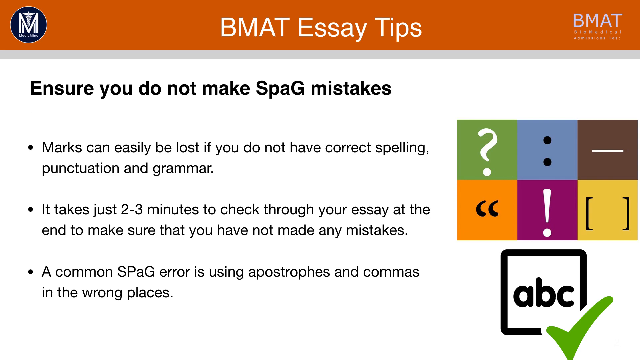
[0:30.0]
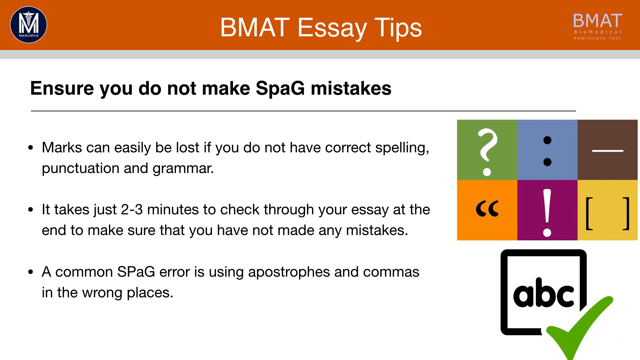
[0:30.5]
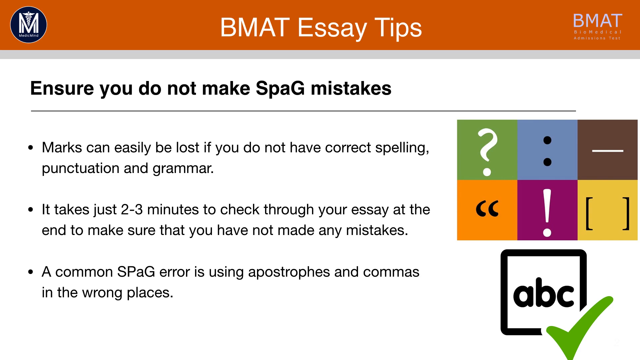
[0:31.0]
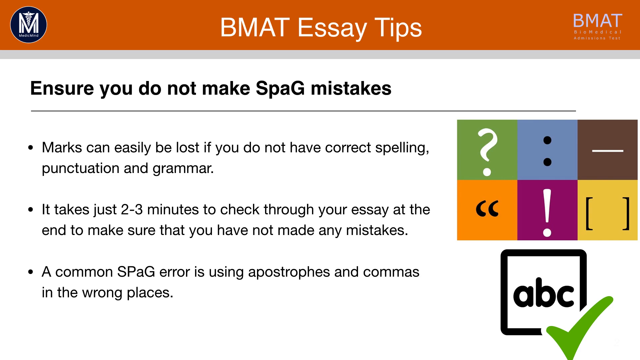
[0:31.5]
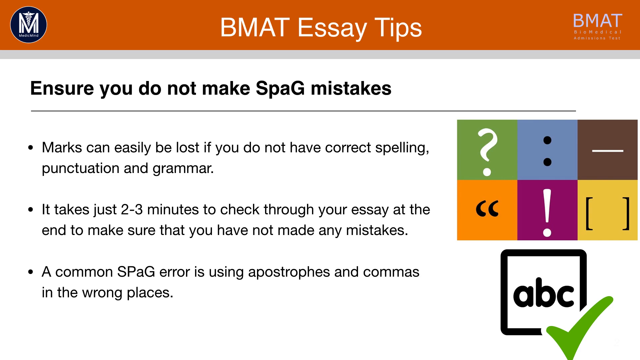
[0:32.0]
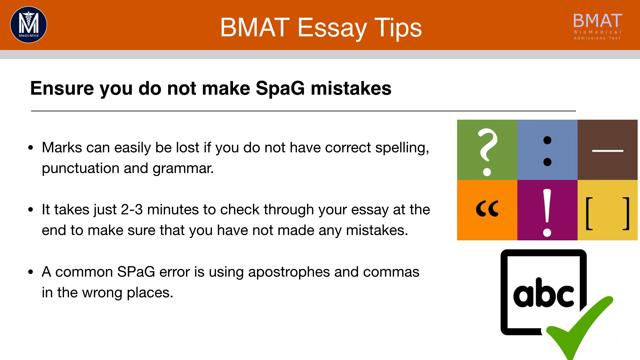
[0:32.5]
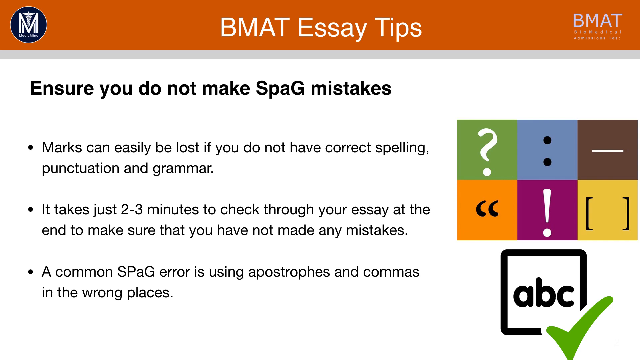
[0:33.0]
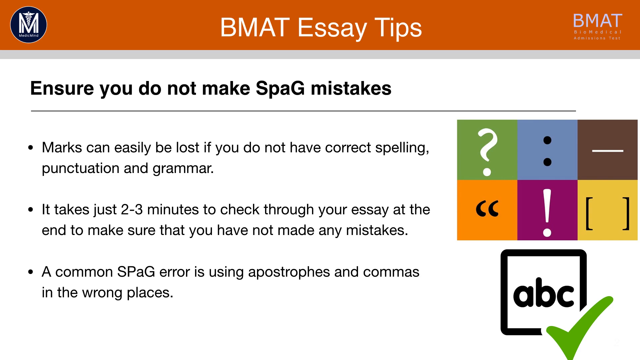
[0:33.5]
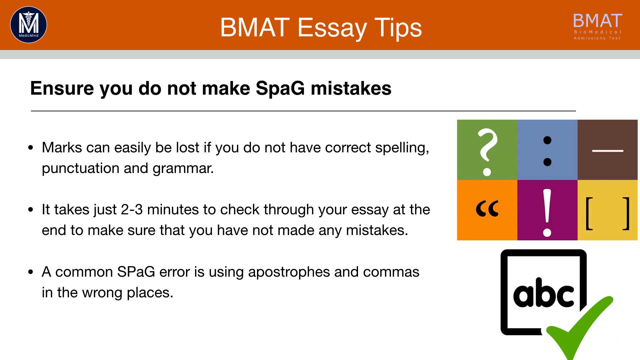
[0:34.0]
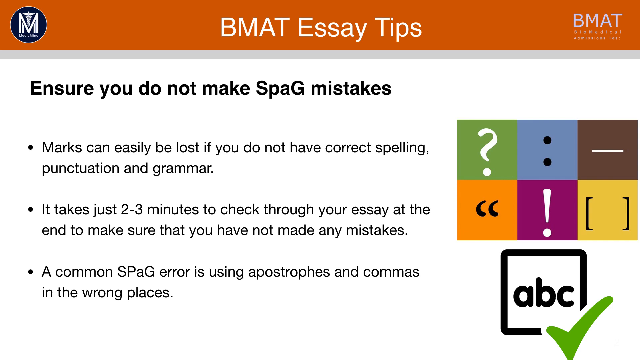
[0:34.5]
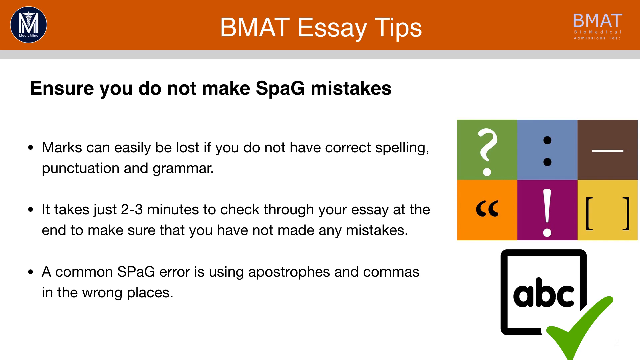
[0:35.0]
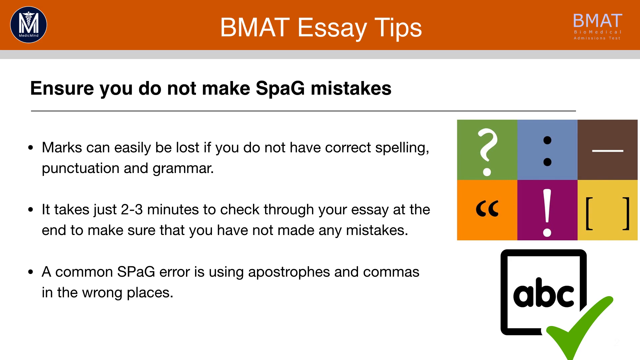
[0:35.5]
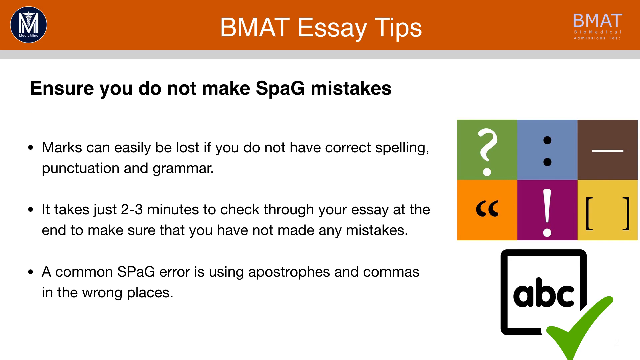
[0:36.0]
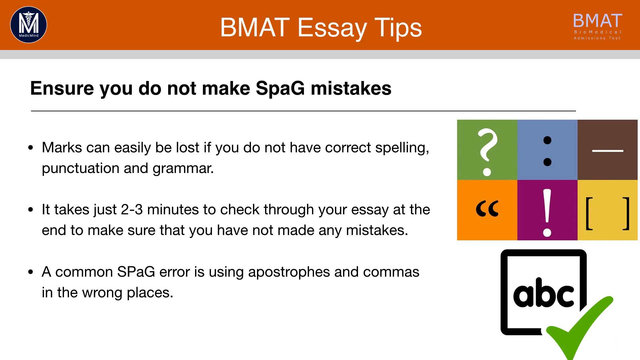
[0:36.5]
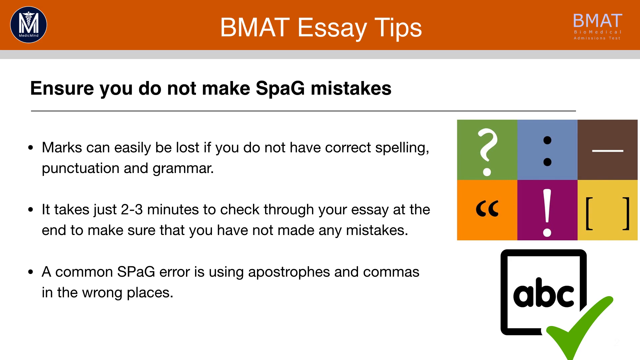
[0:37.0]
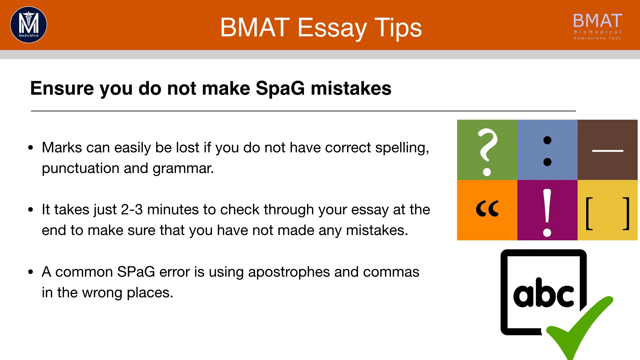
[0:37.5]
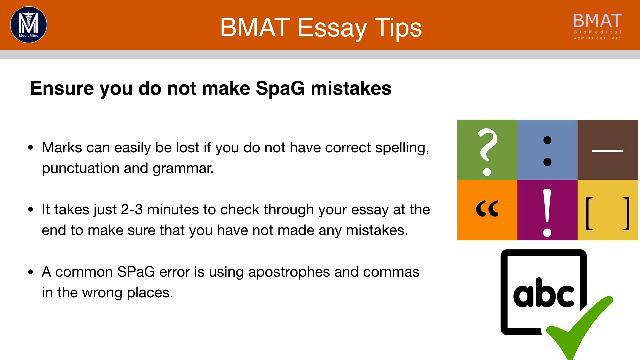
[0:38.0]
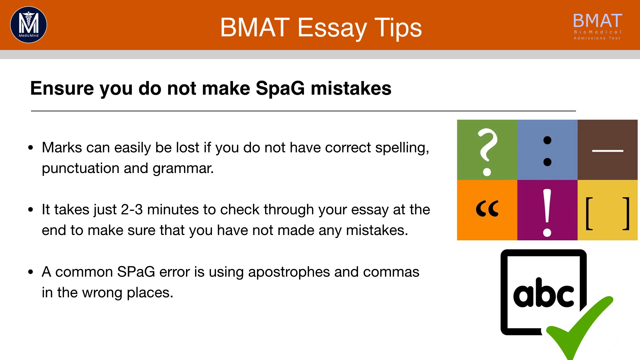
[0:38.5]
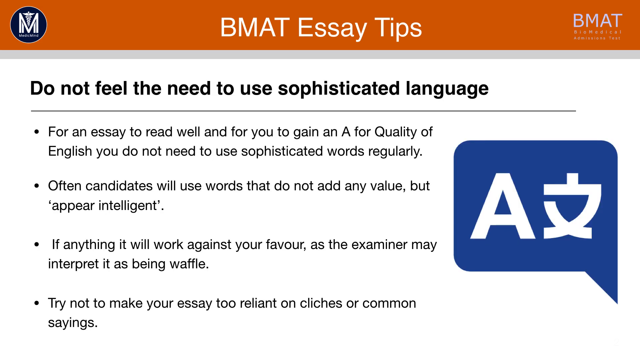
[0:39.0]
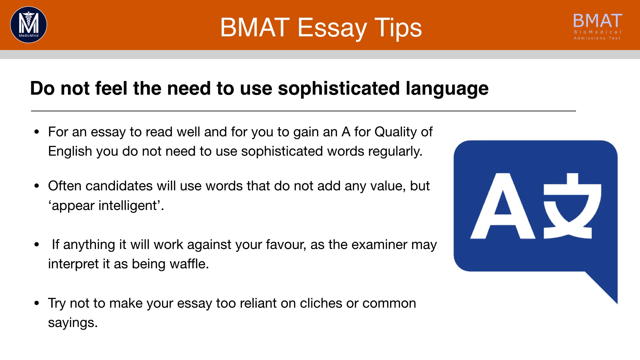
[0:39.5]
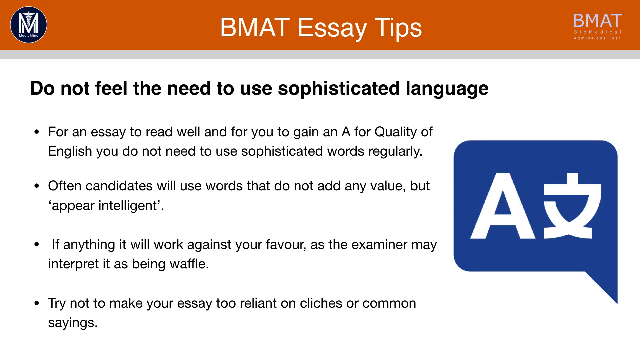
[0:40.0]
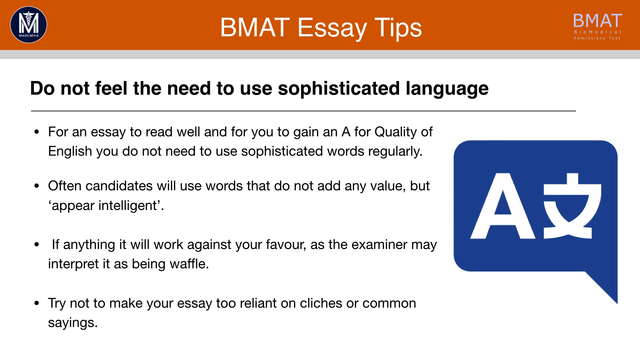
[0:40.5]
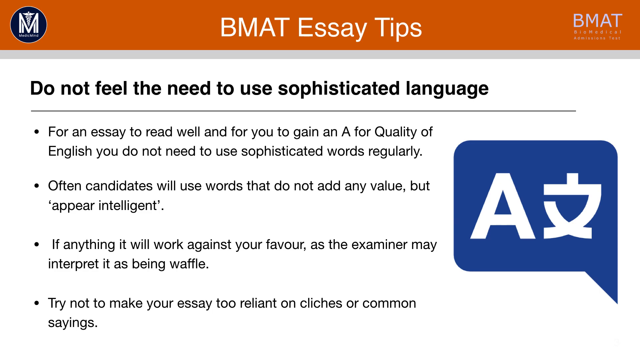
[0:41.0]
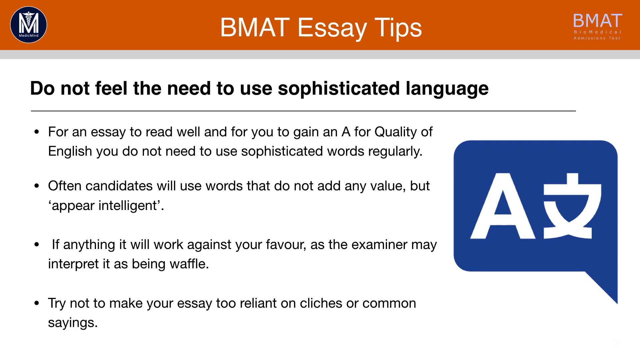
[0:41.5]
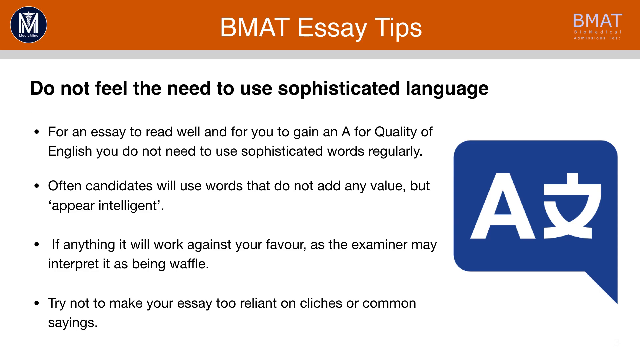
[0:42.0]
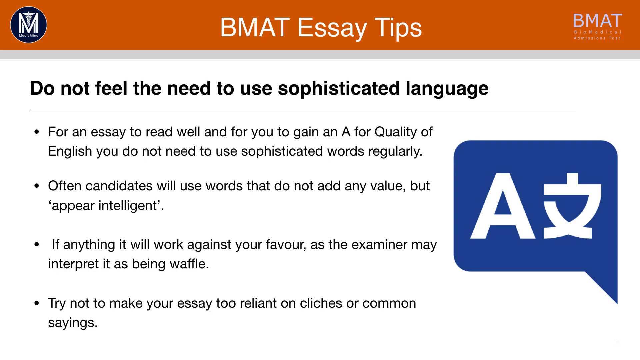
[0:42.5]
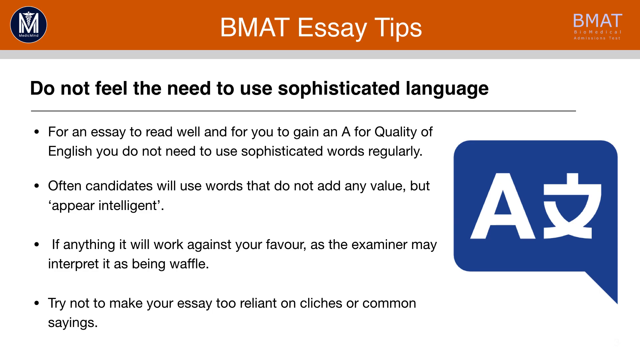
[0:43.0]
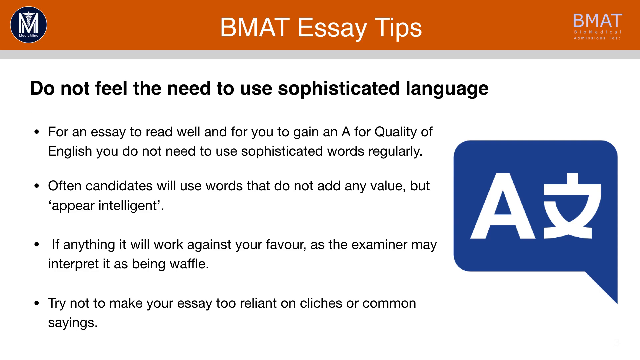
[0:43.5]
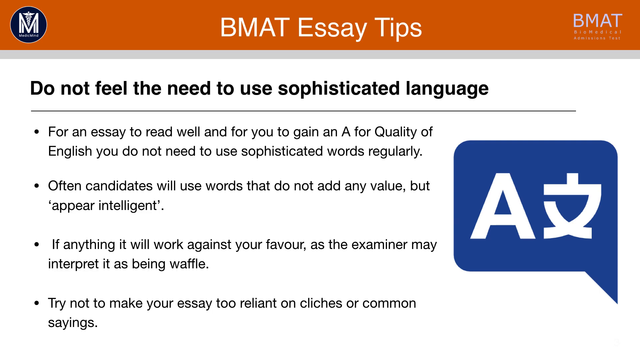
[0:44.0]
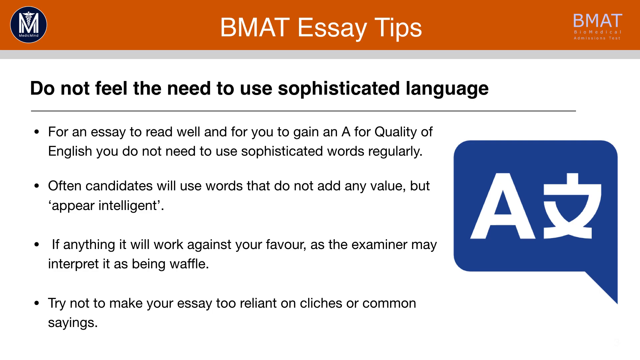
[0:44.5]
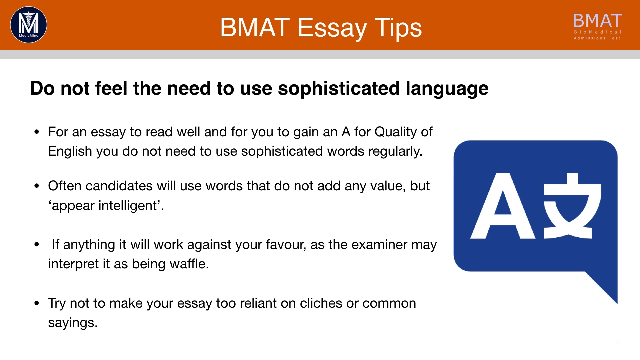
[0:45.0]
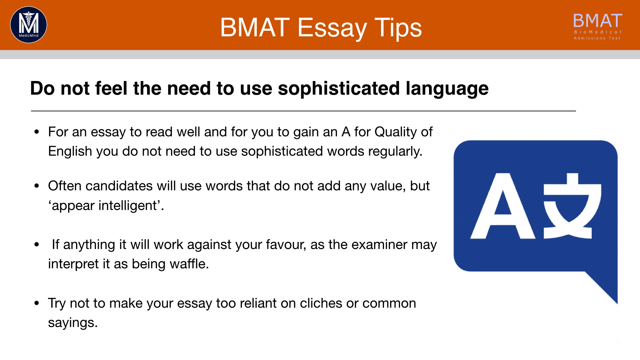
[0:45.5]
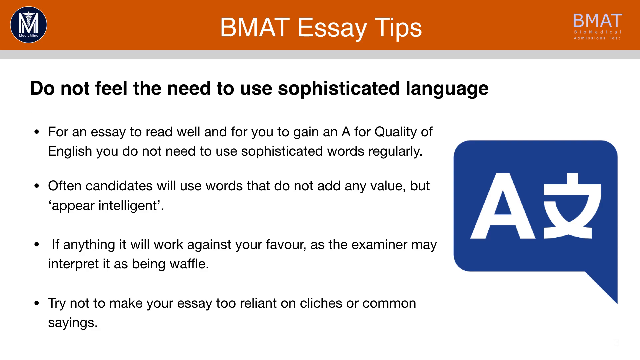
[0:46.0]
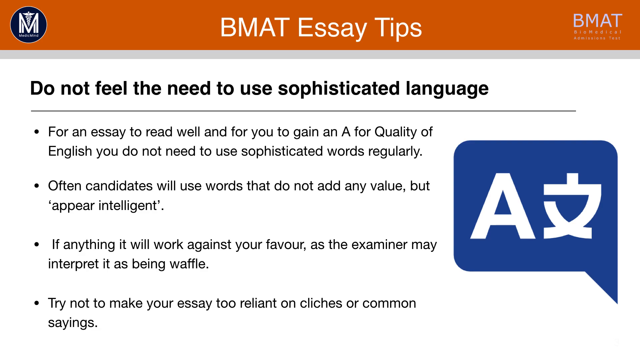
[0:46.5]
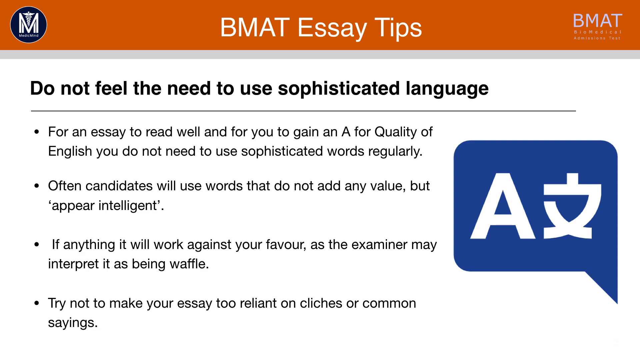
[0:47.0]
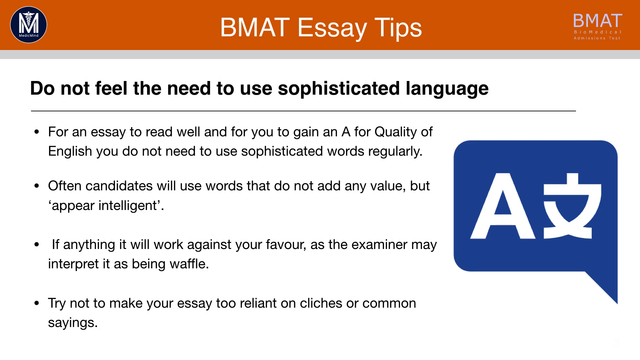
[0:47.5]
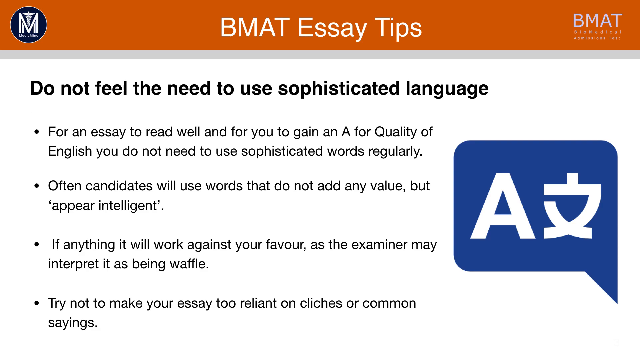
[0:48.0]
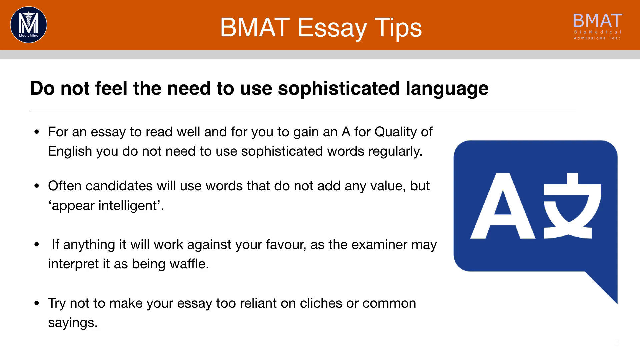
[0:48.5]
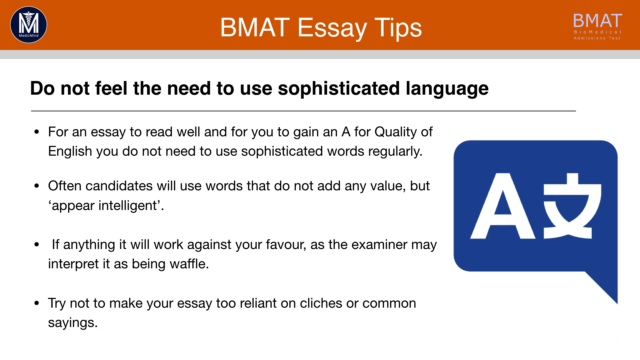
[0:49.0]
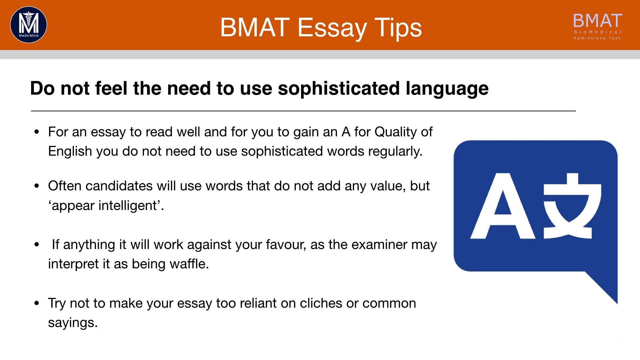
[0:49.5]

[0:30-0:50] The same slide remains, with the orange overlay at the top reading "BMAT Essay Tips", the logo from the start at the top left and a BMAT logo at the top right. Below is black text with three black bullet points, each a sentence of information. Icons on the right of the screen show different grammar and punctuation symbols, with an ABC logo below them. It then transitions to another slide with the same orange overlay and more black text below, reading "do not feel the need to use sophisticated language". Four bullet points of information are below it. On the right side of the screen is a blue logo with a large A and another character written in white. This slide remains on screen for the rest of this section.